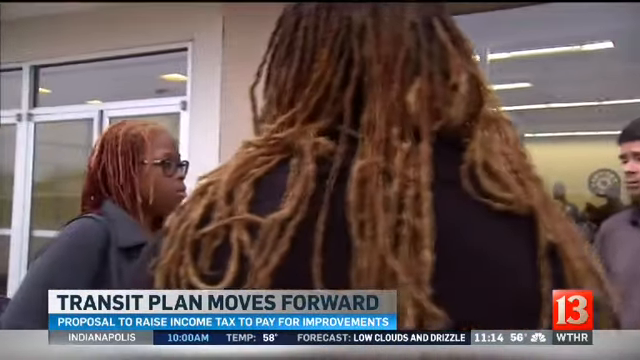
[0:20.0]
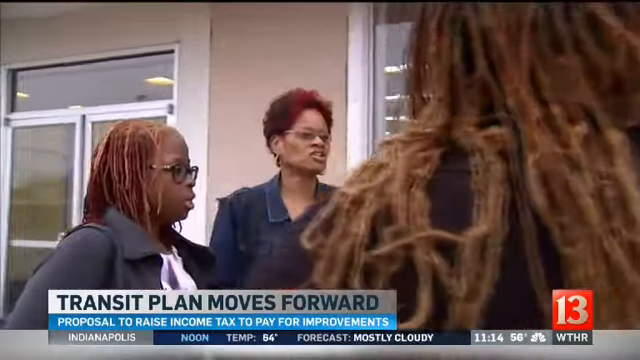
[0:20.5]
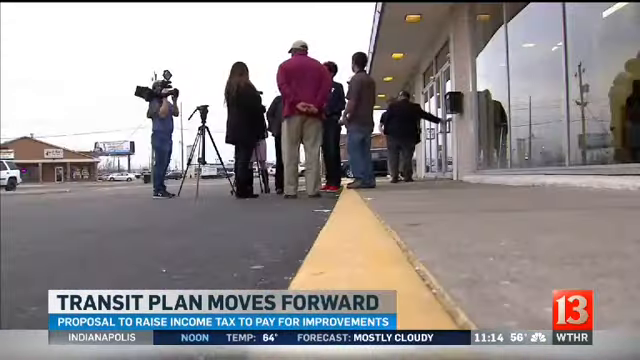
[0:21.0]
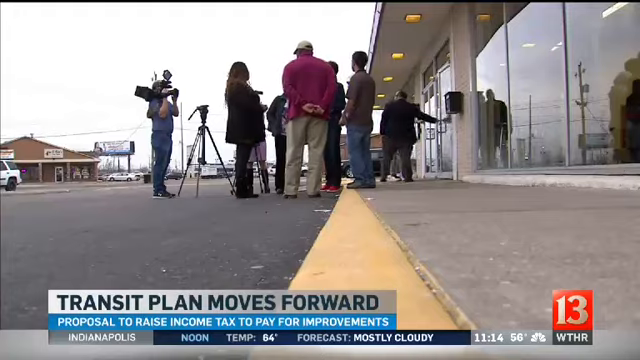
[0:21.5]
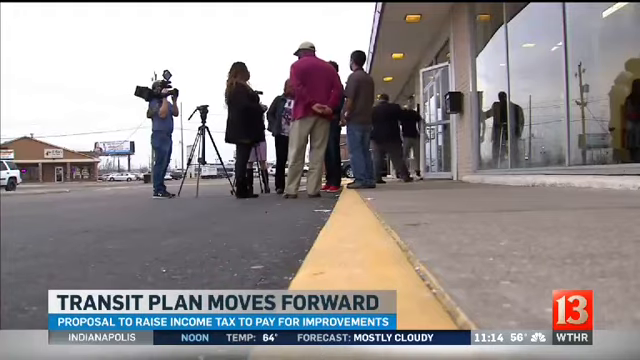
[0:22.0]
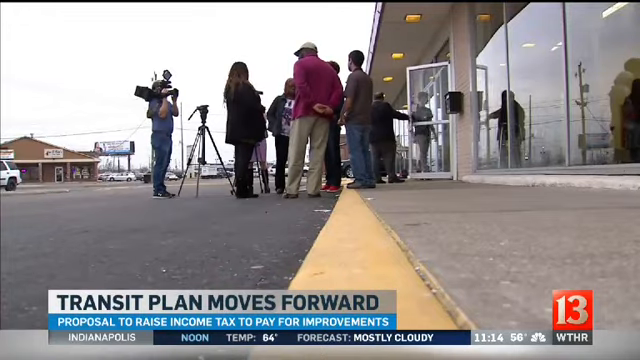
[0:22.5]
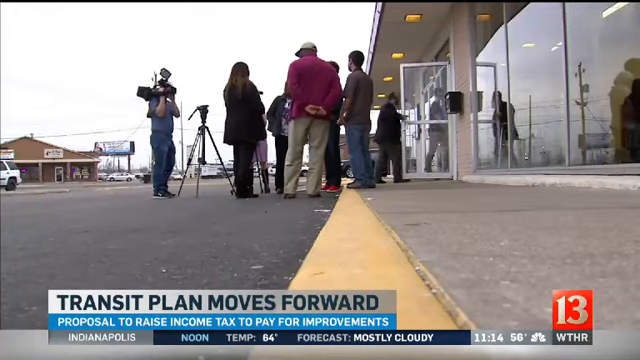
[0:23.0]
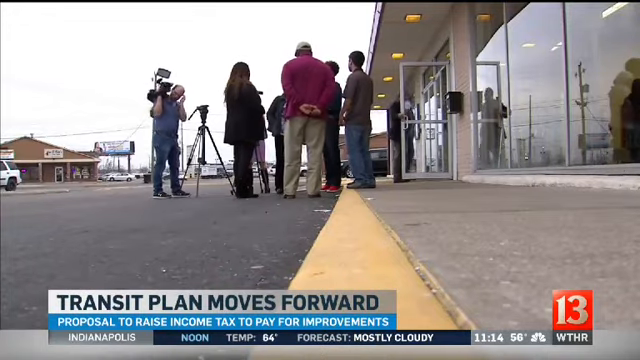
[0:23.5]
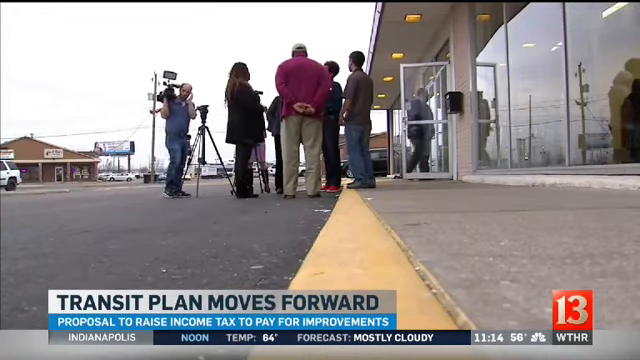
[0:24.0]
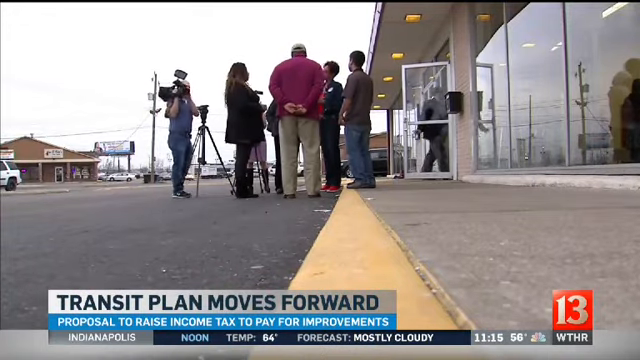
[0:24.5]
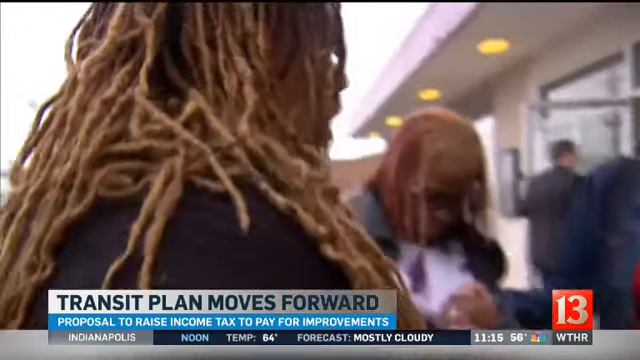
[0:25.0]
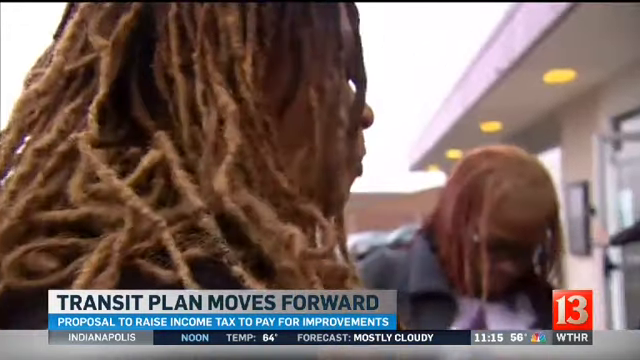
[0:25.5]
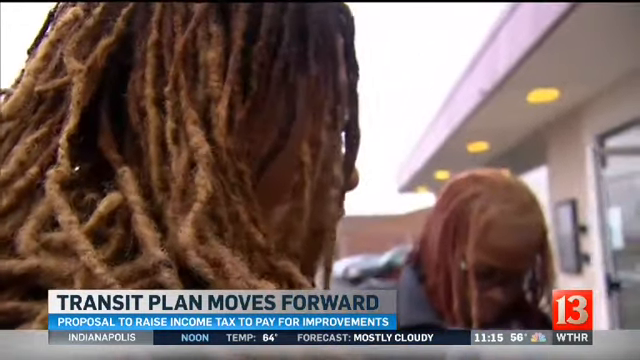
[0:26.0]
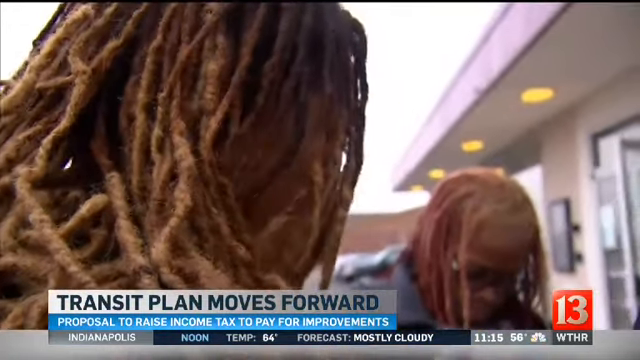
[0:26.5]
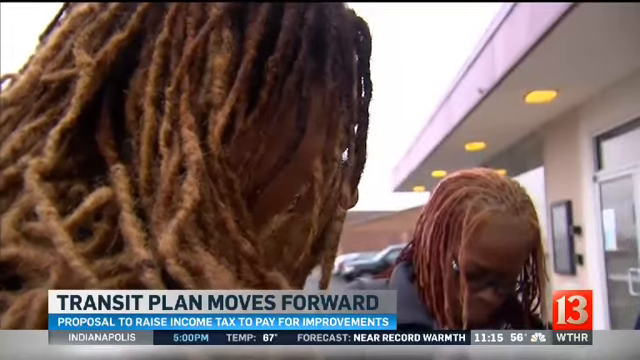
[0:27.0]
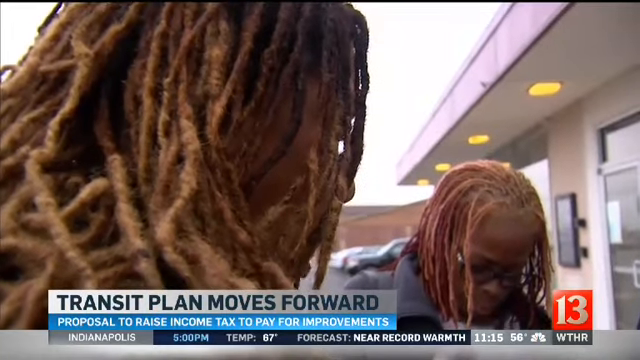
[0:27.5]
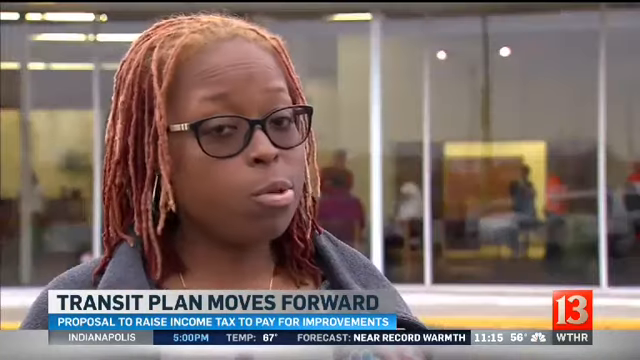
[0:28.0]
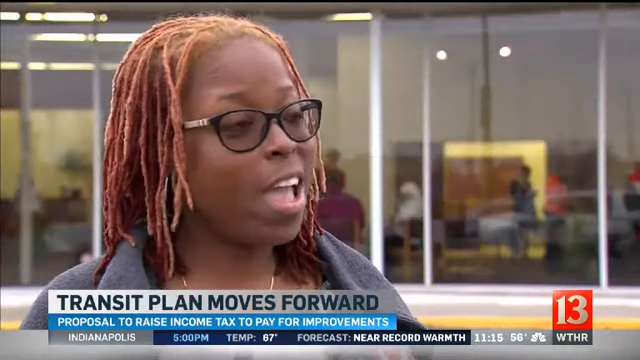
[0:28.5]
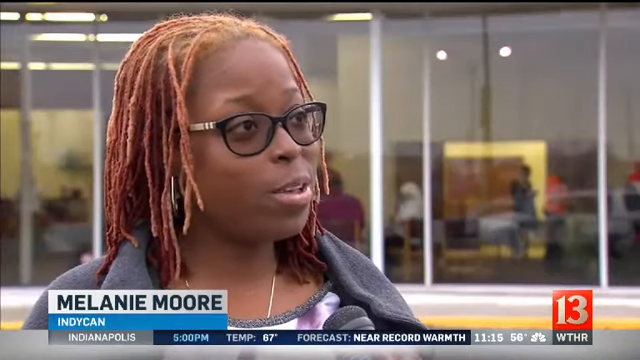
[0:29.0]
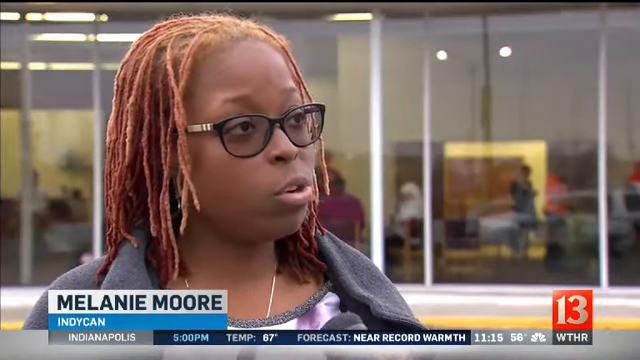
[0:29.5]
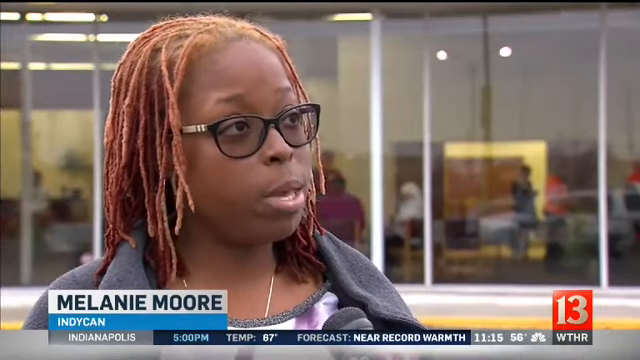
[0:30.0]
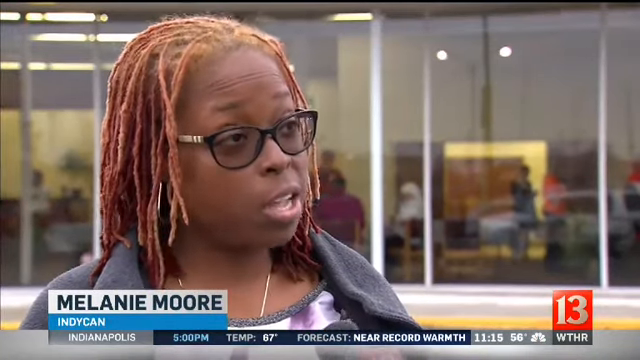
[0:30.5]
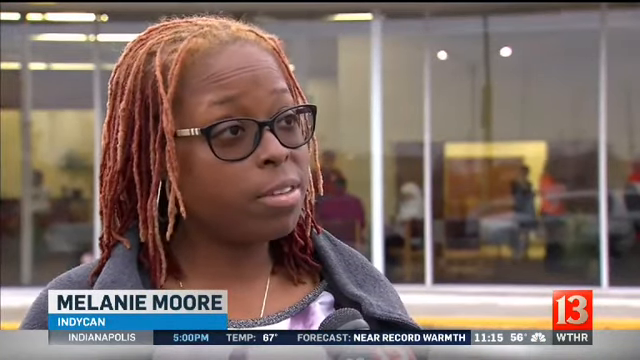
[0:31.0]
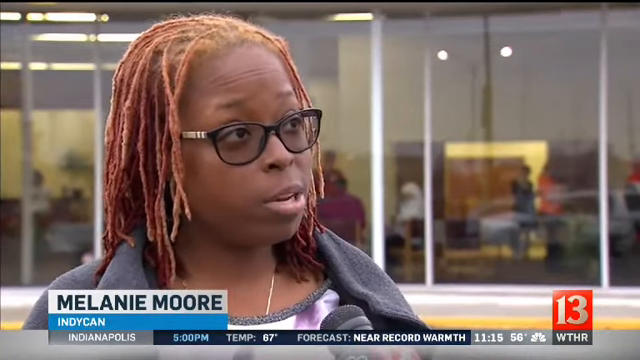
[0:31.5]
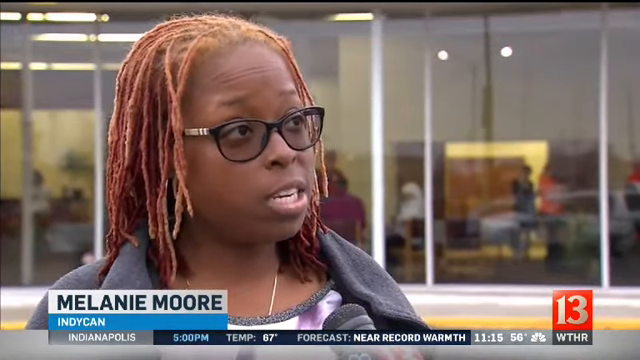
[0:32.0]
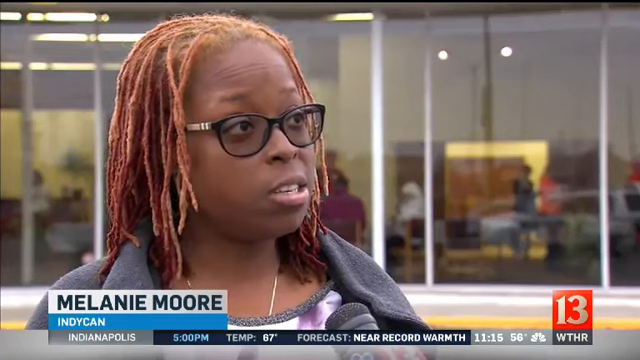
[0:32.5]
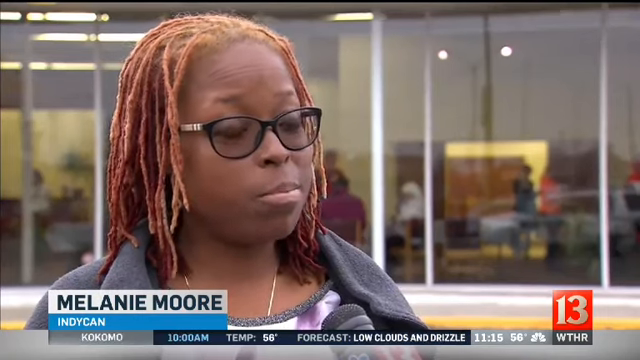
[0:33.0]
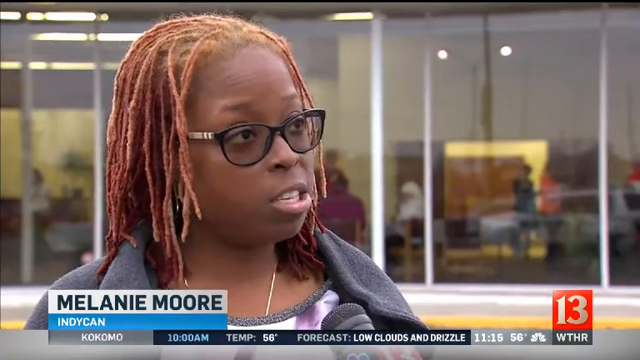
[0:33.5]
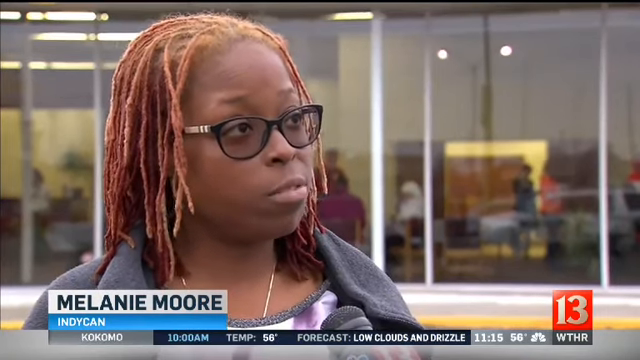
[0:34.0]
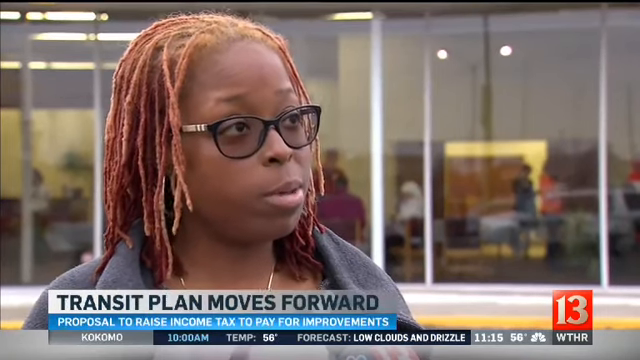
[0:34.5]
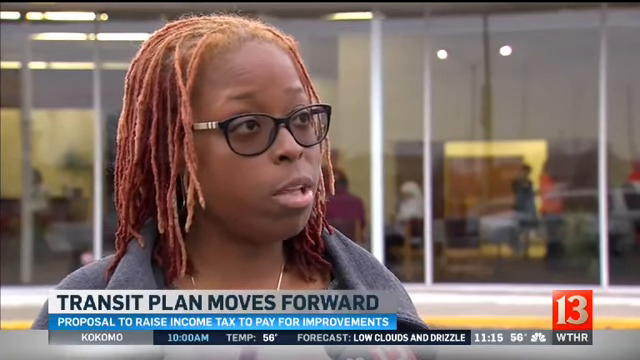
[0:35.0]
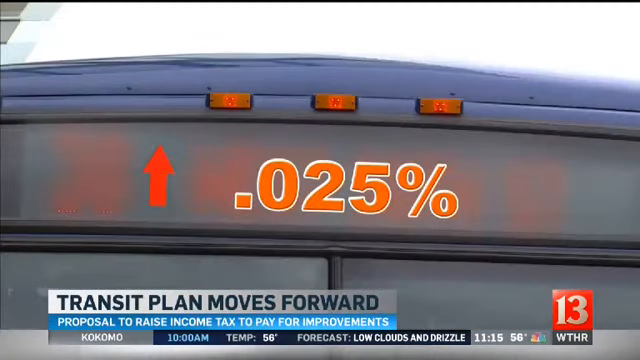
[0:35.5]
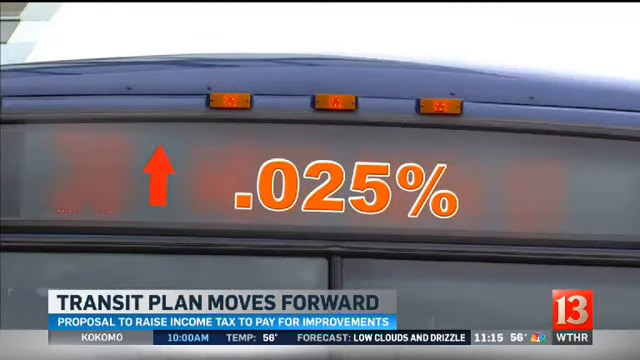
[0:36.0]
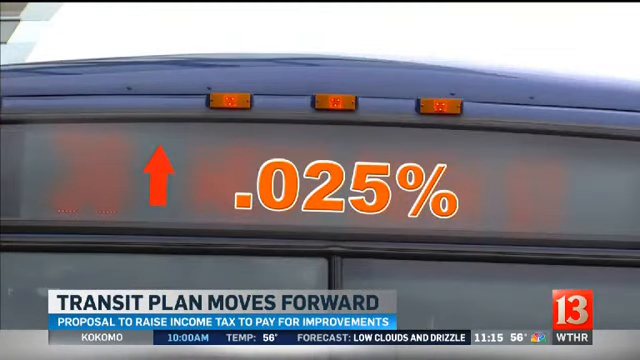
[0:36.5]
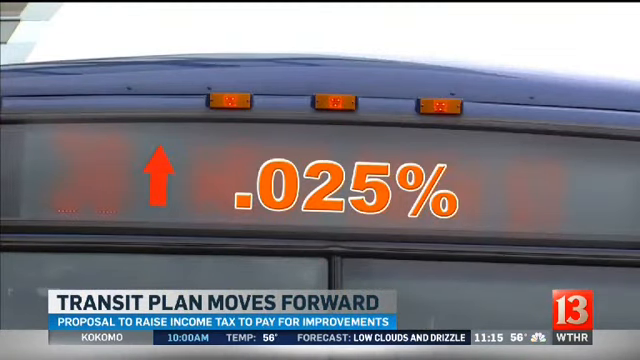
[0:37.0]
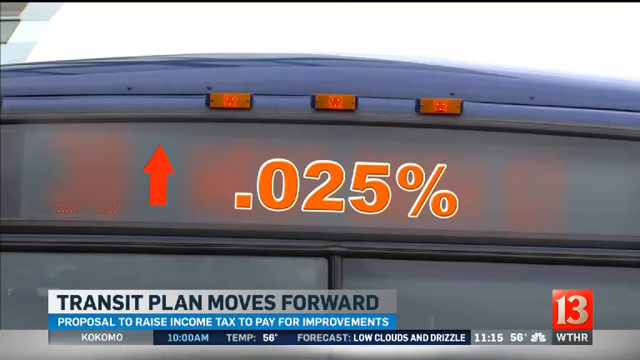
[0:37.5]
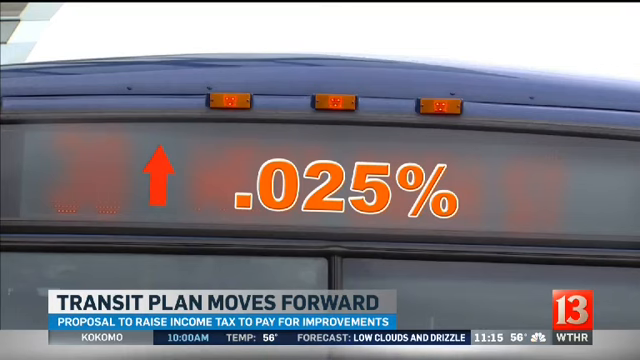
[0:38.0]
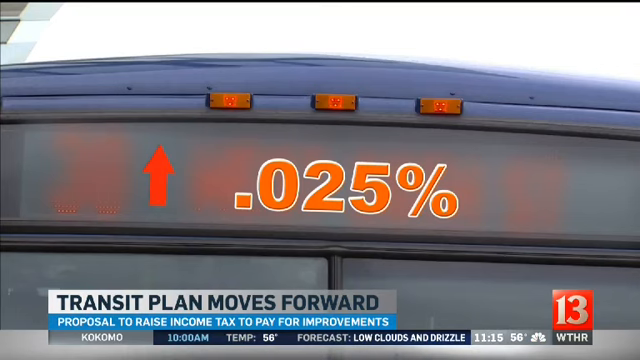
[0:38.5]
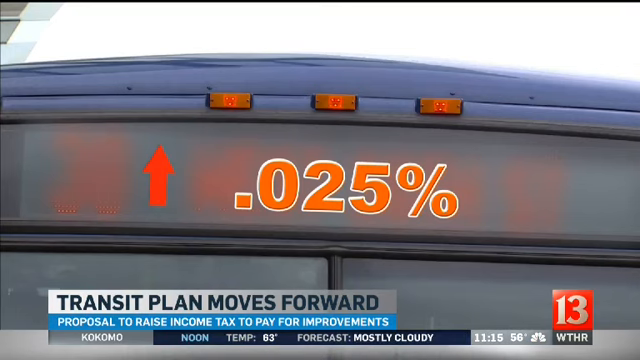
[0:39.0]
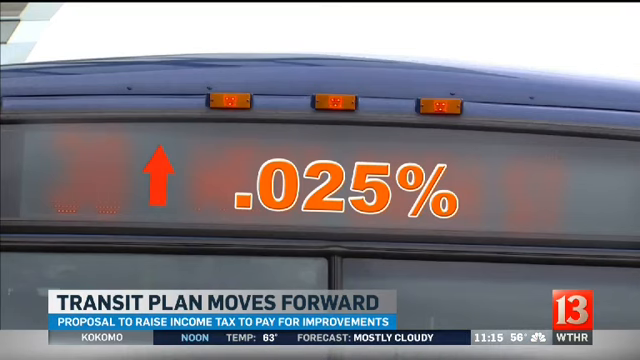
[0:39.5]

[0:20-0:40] People are standing around outside doors that look like those of a supermarket. A red square with "13" on the lower left is superimposed over everything. At the bottom it says "transit plan moves forward" and "proposal to raise income tax to pay for improvements", with information about Indianapolis. There are several women; some have dreadlocks and some do not. The image moves to an African-American woman with black glasses and red dreadlocks, and the text changes to show her name: "Melanie Moore". It then goes back to saying "transit plan moves forward", over what looks like the back of a car bumper or something, which is somewhat confusing. A thick red arrow points up, with "0.025%" in orange next to it.